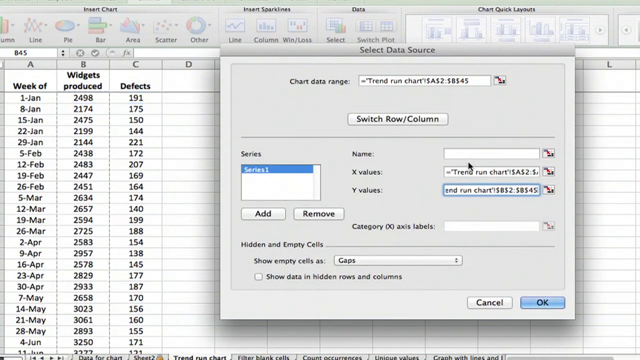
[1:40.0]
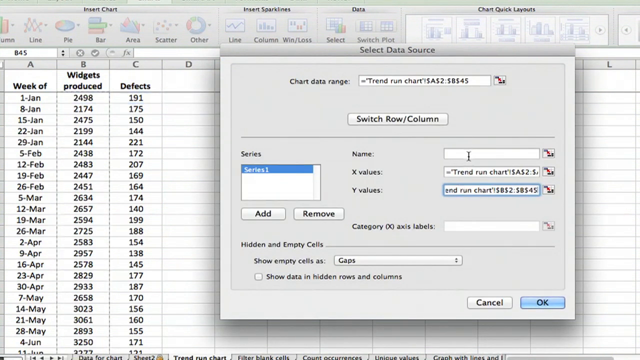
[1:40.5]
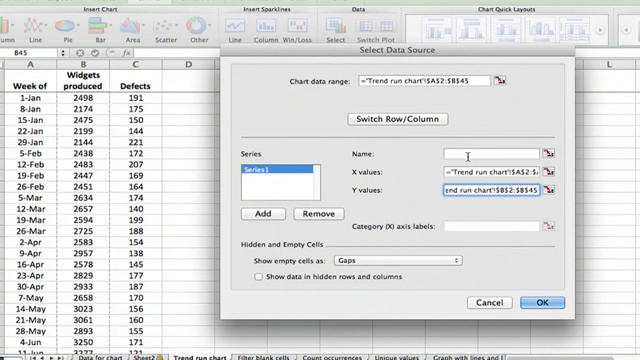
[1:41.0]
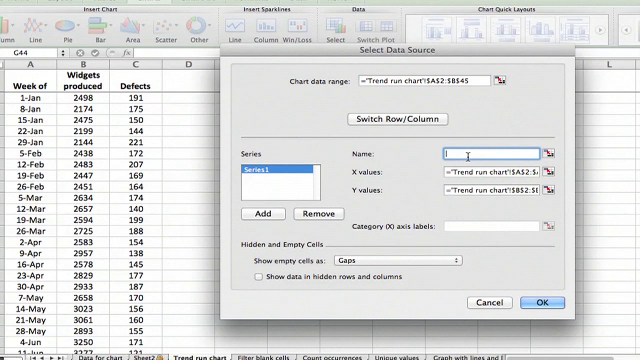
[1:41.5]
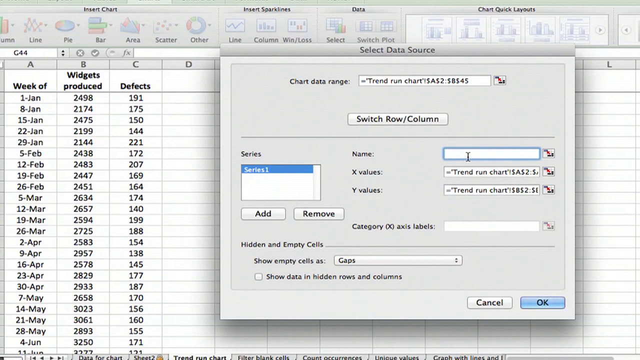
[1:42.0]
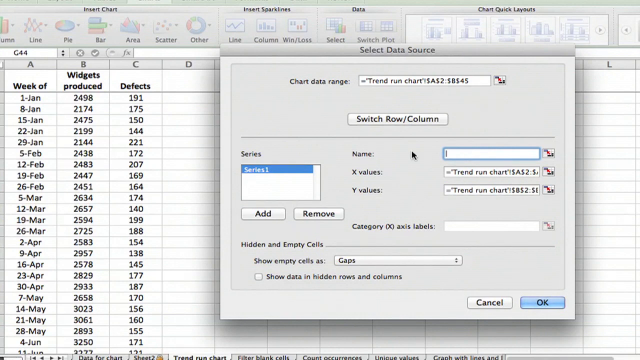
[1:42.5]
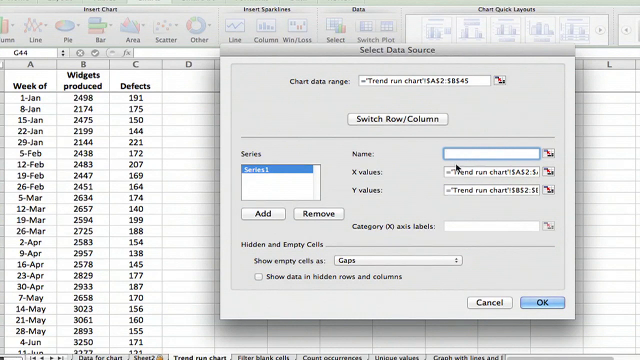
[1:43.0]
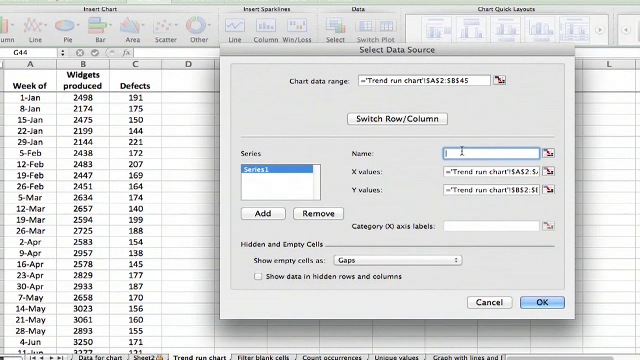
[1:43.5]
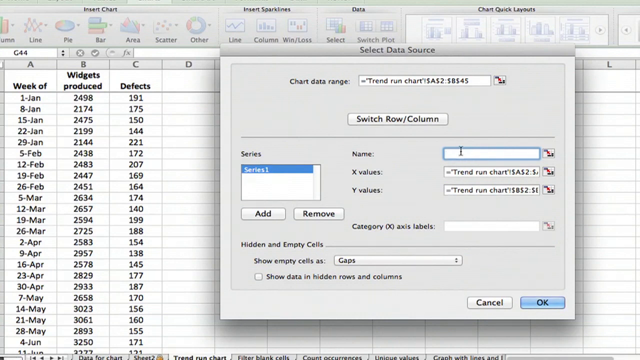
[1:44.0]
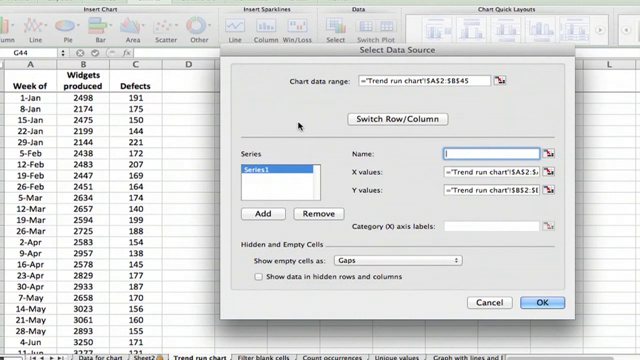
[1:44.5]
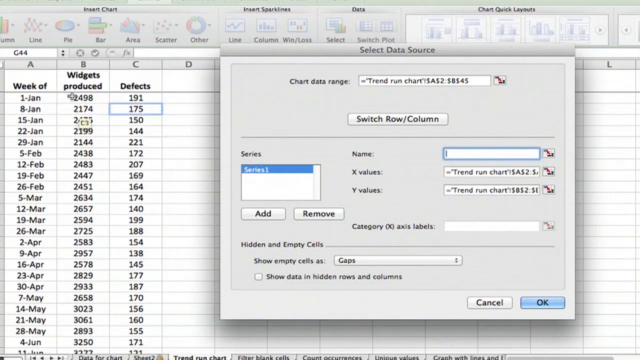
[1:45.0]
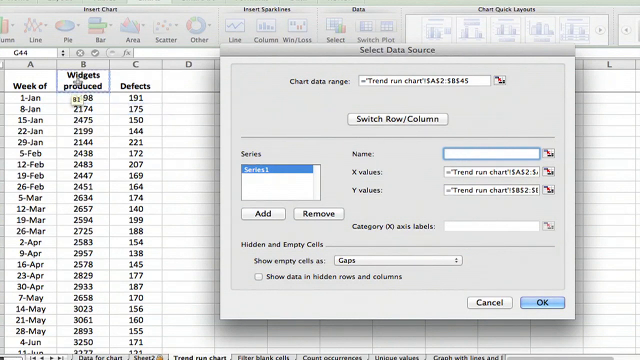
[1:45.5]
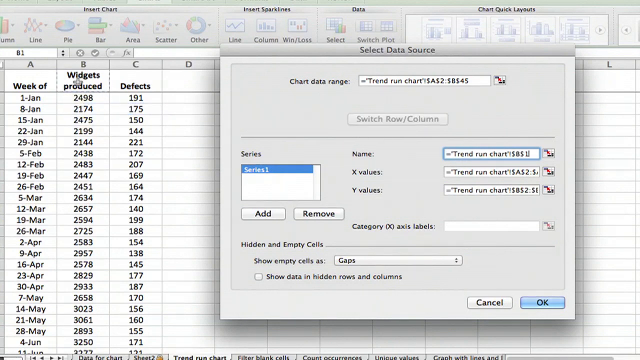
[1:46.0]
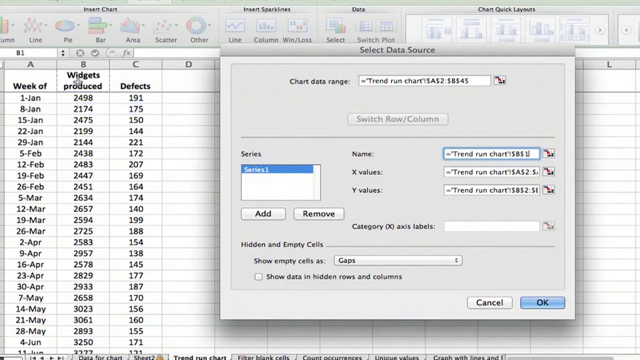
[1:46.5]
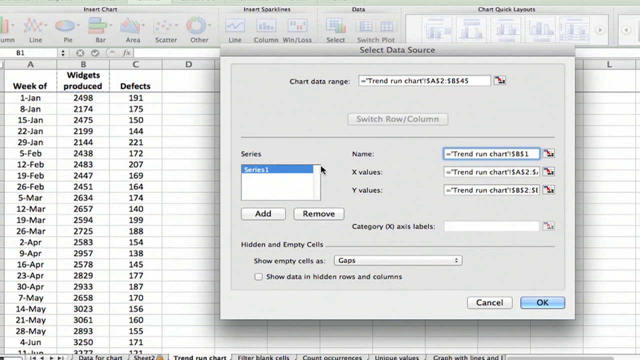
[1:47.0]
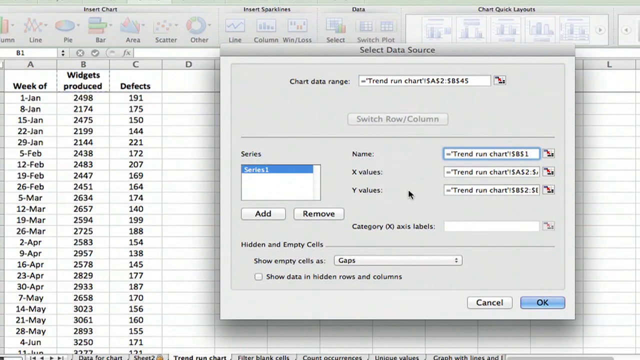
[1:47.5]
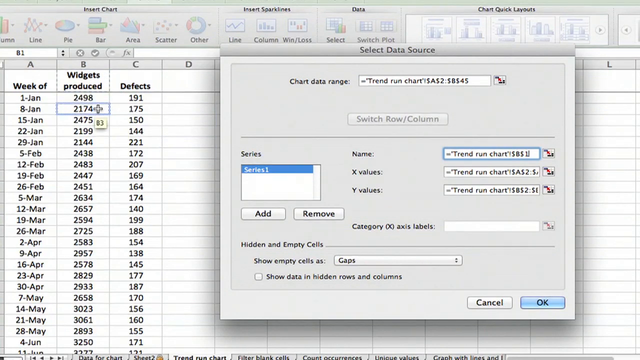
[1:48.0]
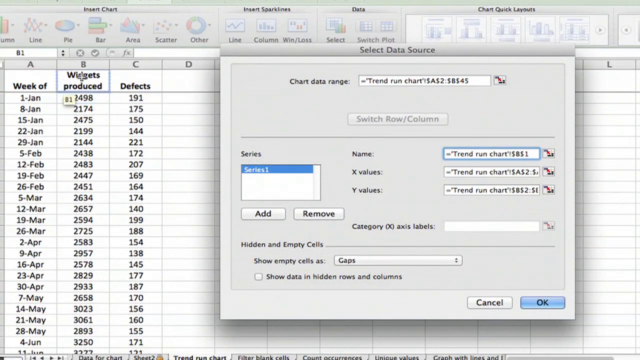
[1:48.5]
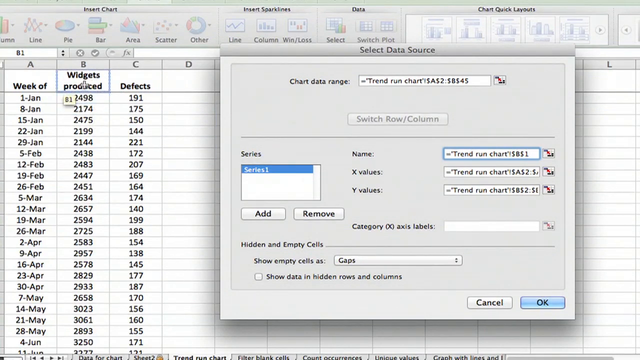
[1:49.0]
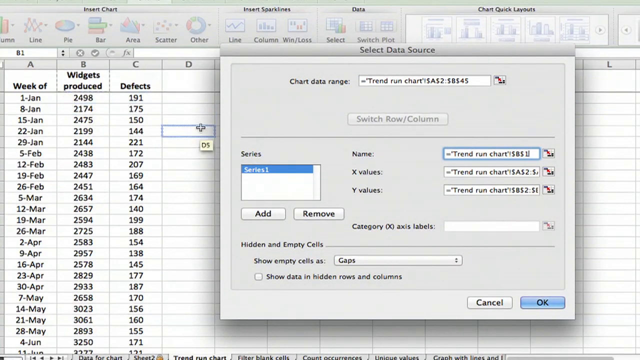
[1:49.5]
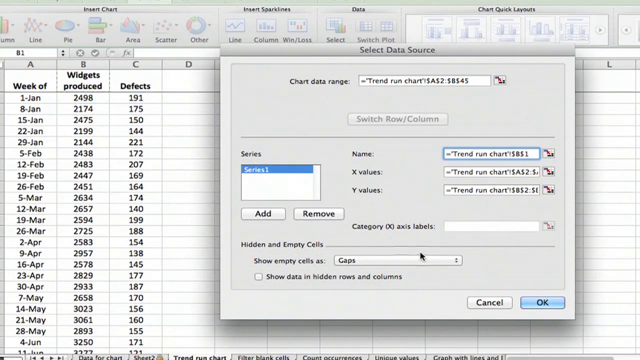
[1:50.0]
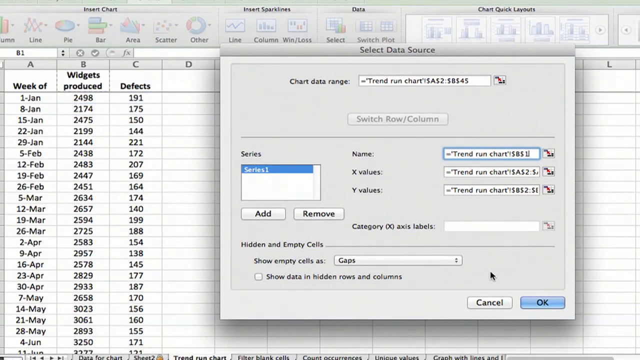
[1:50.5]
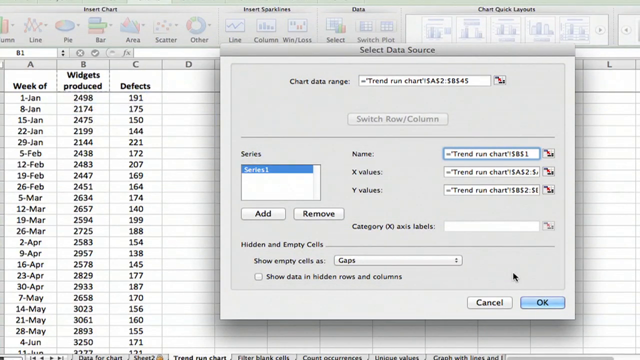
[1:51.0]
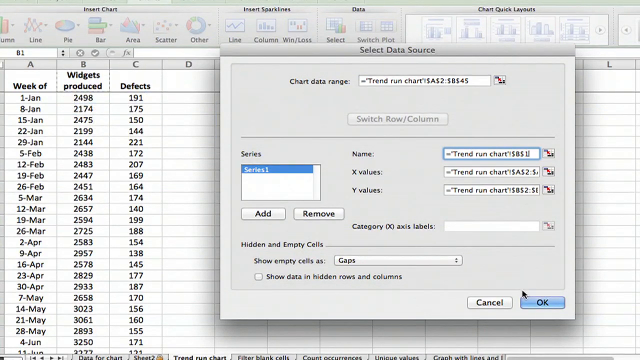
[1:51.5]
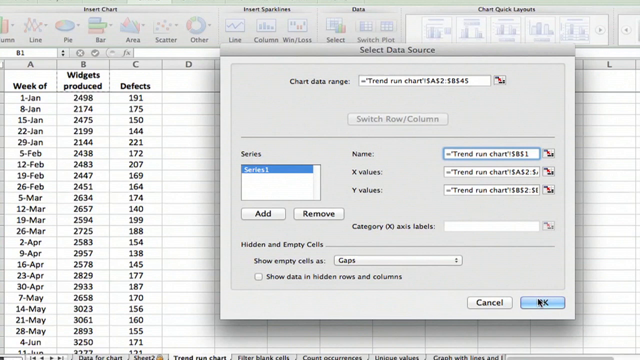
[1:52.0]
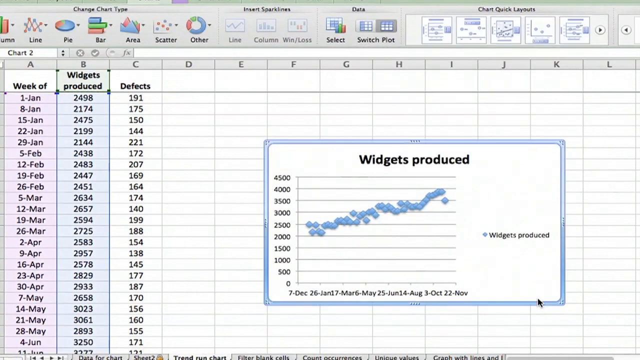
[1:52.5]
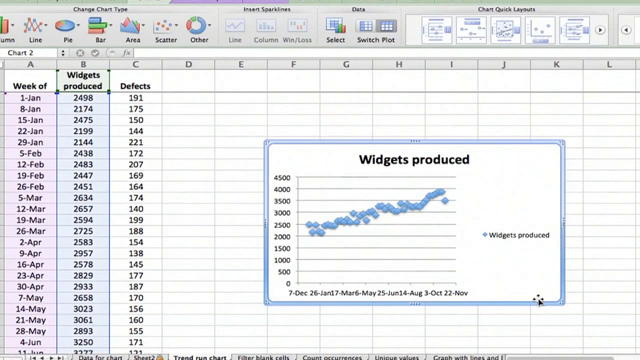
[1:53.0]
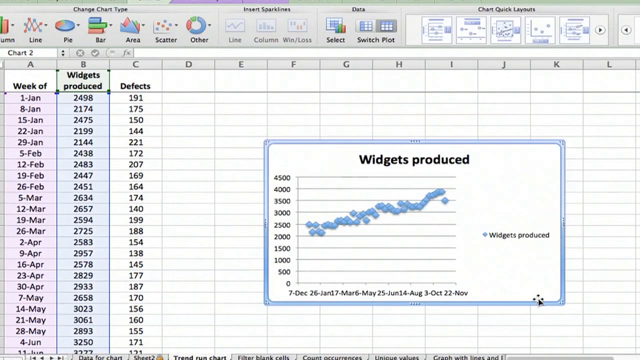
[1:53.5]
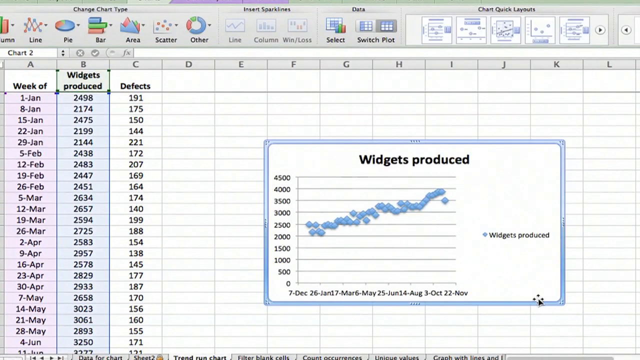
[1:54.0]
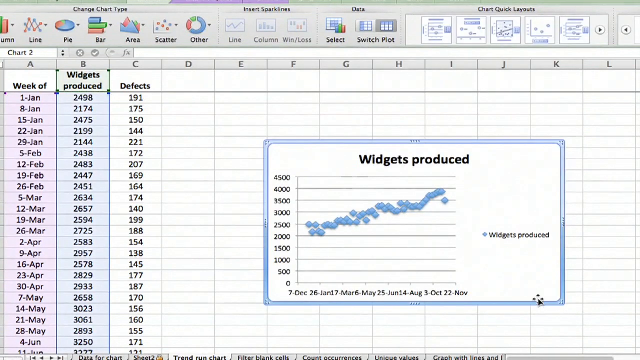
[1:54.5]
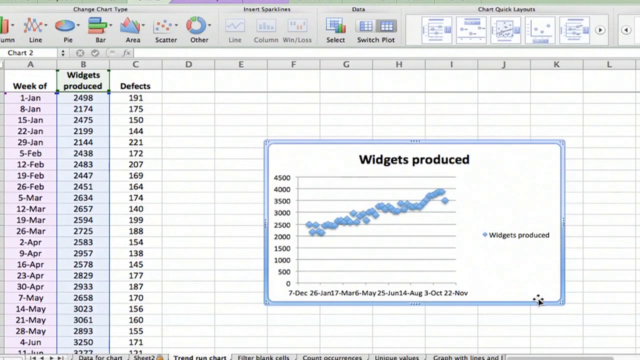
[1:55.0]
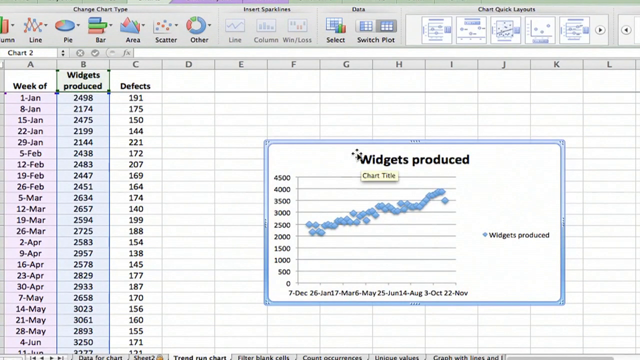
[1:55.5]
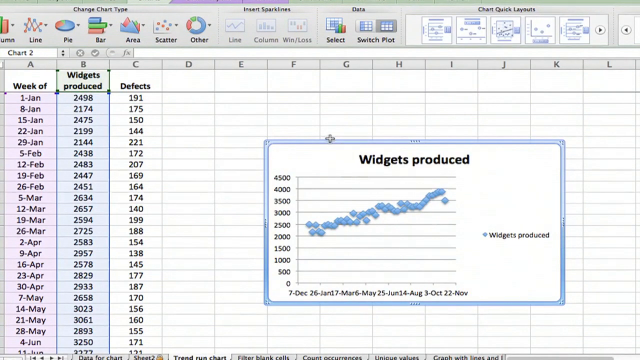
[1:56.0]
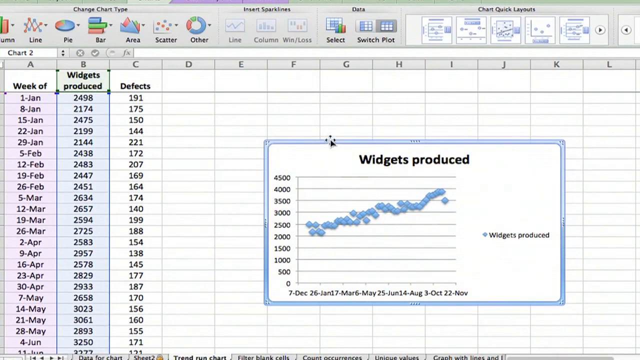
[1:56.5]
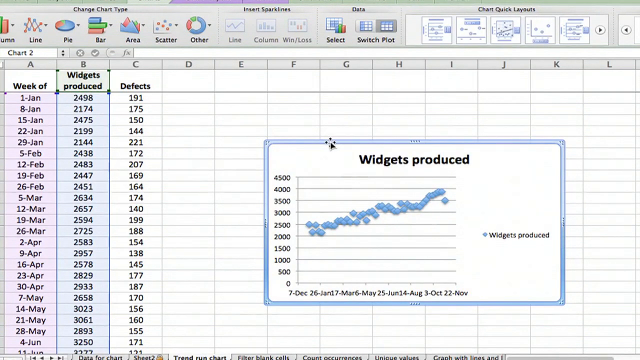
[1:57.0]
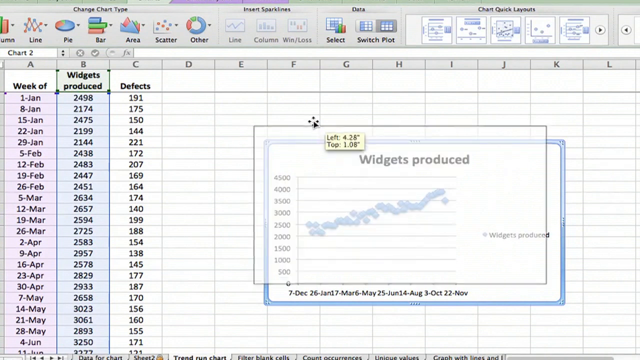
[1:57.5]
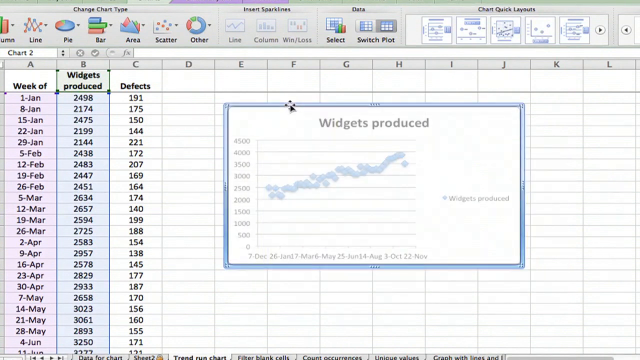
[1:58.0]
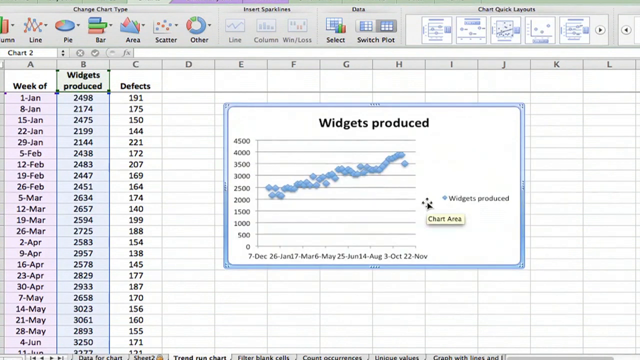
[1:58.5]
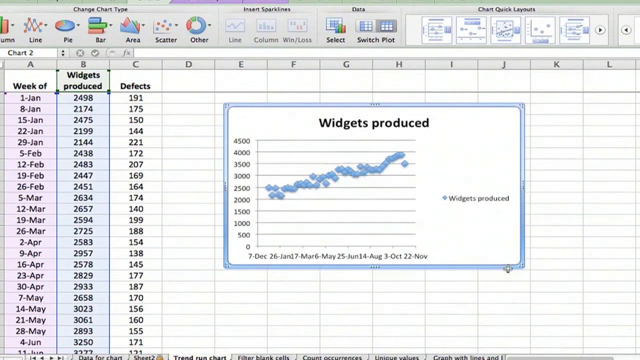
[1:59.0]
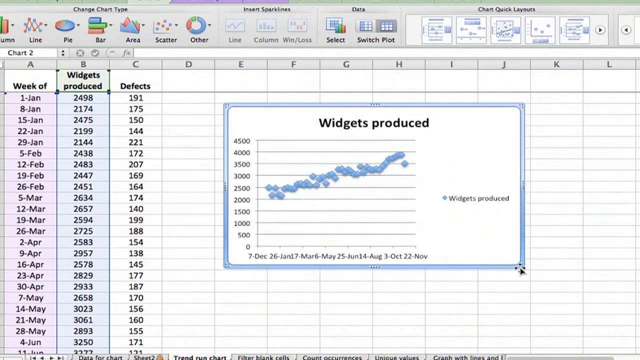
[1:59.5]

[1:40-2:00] An Excel document with three columns of data, Week of, Widgets Produced and Defects, is in focus. The user is filling in the options for charting the data with Marked Scatter from the Charts option. The user applies a name, the name of column B, widgets produced, and clicks OK. The chart then fills in with the title widgets produced and the data. The vertical axis ranges from 0 to 4,500, with most of the data between 2,000 and 4,000. The horizontal axis shows dates from 7 December to 22 November, with most of the data falling between January and October. The user then selects the chart and drags it closer to the top of the document.